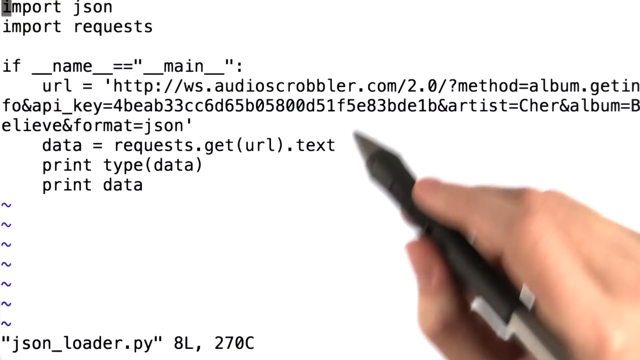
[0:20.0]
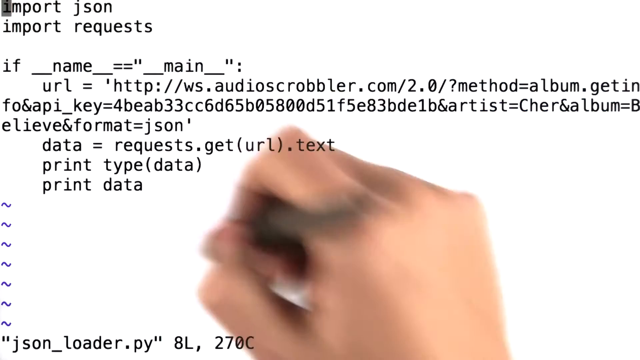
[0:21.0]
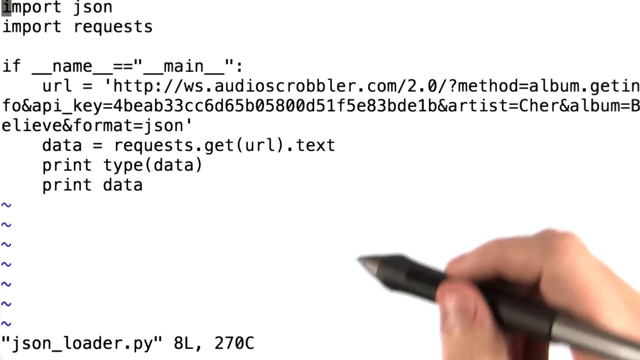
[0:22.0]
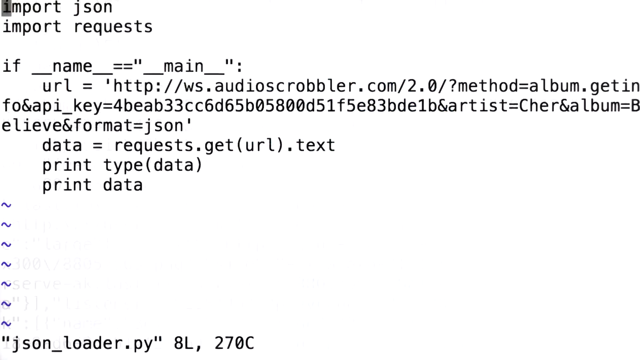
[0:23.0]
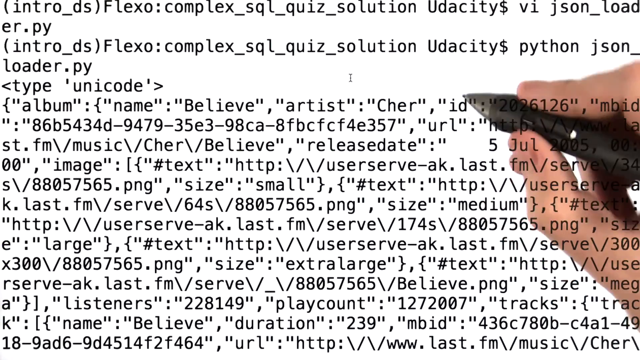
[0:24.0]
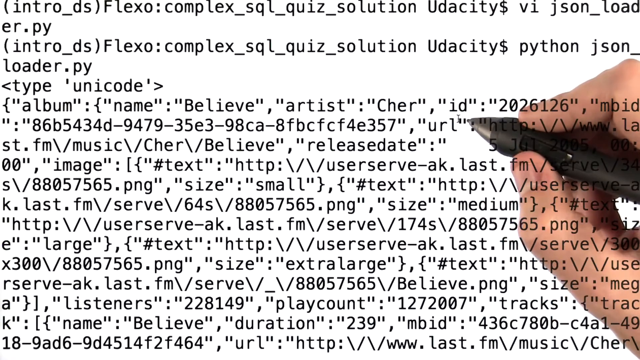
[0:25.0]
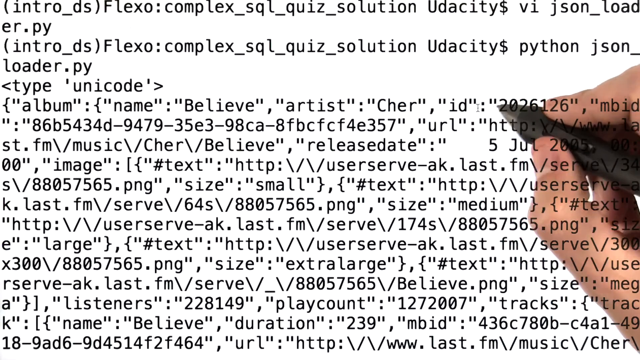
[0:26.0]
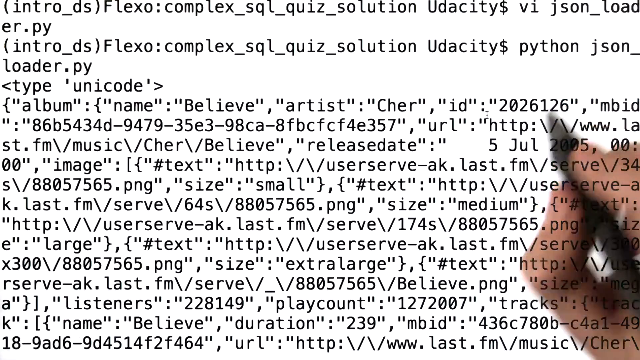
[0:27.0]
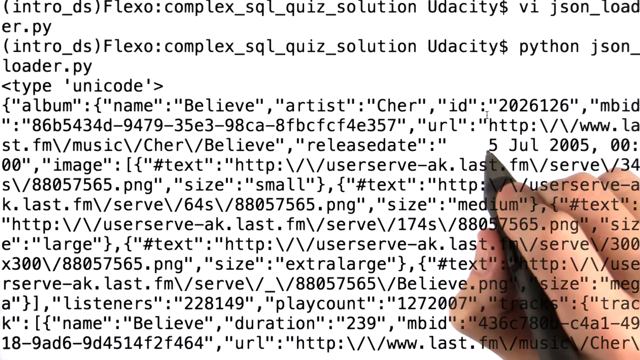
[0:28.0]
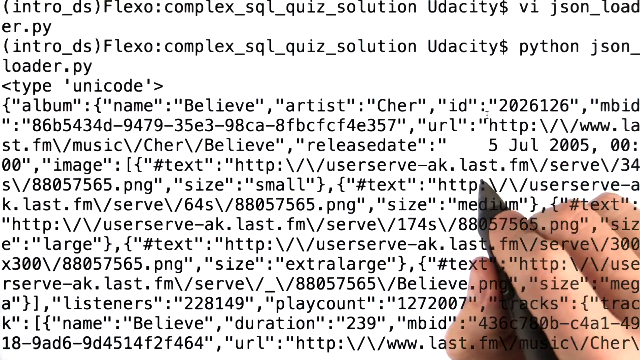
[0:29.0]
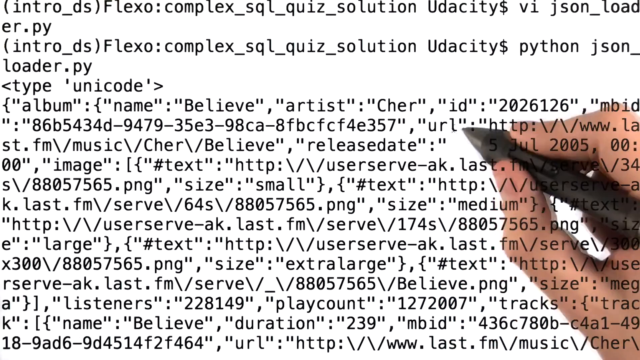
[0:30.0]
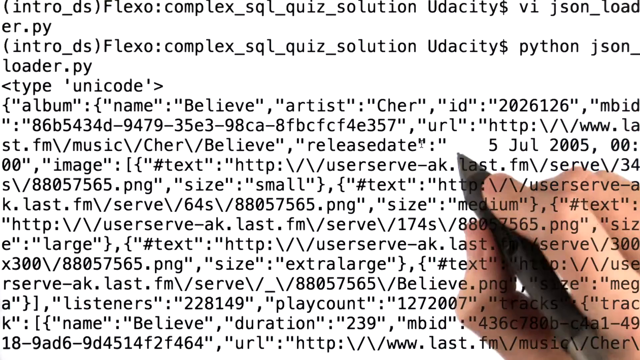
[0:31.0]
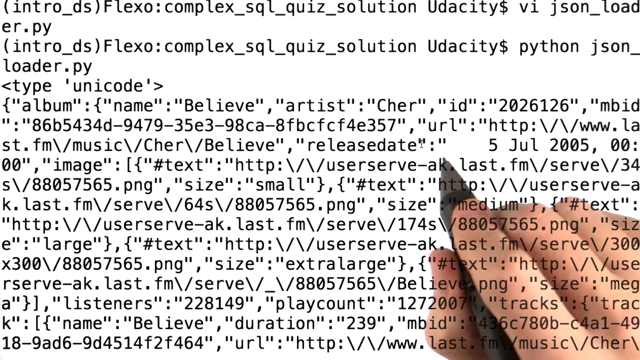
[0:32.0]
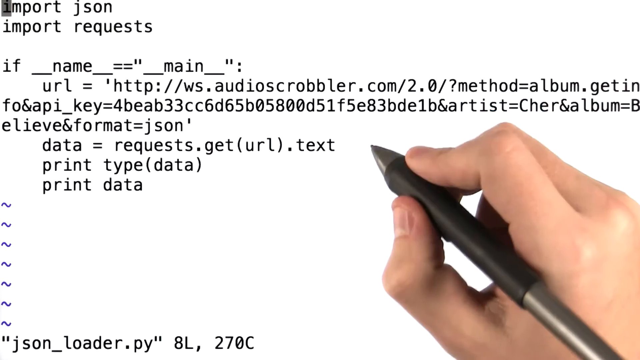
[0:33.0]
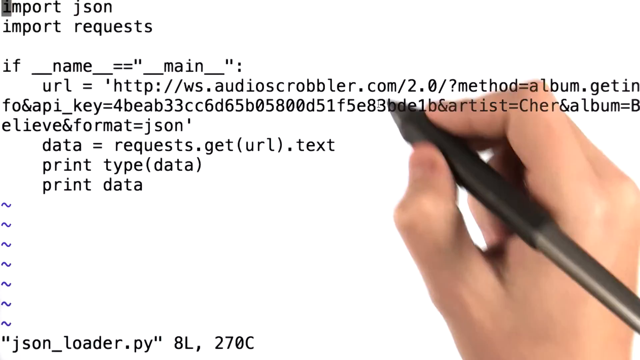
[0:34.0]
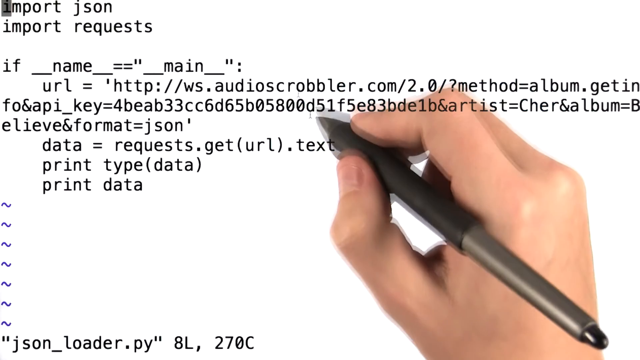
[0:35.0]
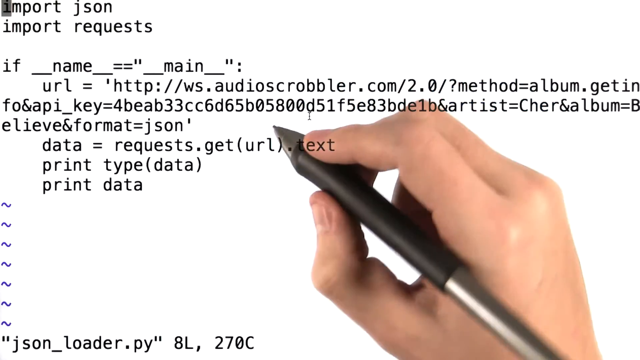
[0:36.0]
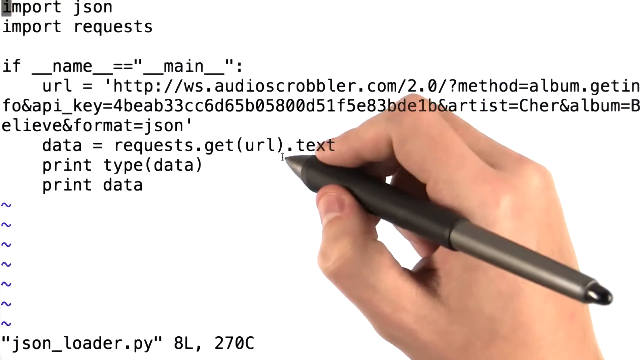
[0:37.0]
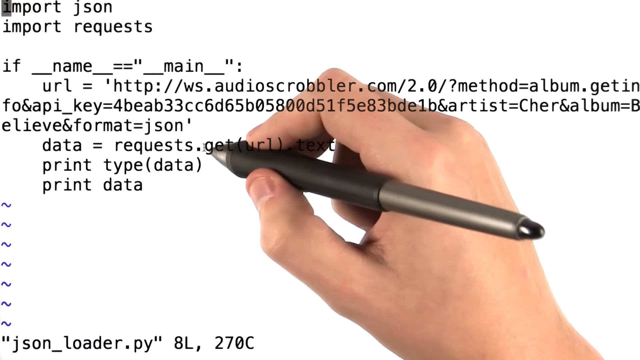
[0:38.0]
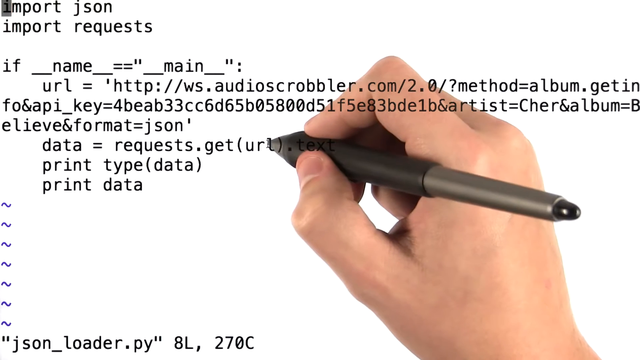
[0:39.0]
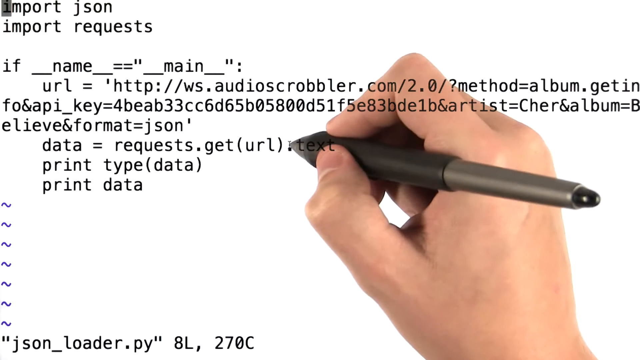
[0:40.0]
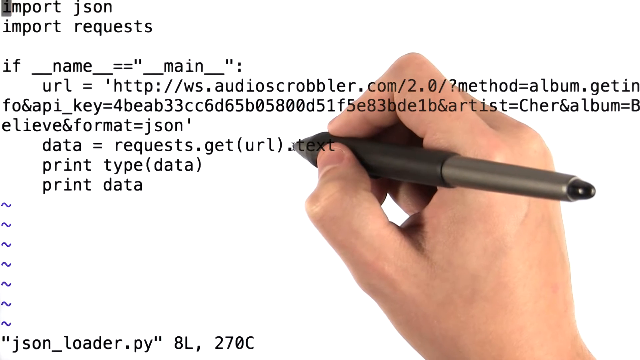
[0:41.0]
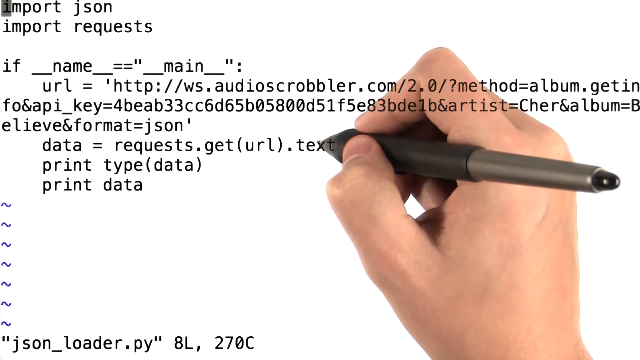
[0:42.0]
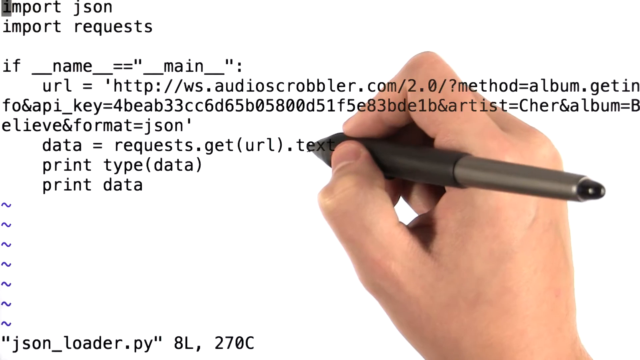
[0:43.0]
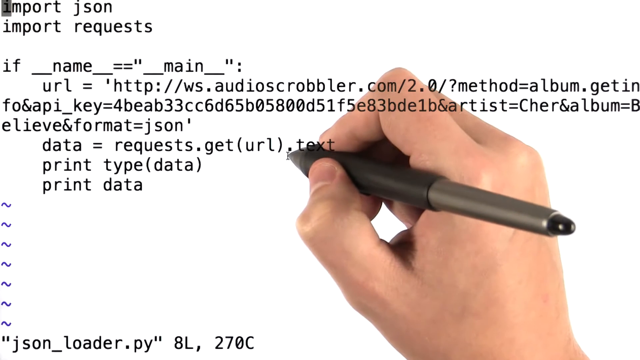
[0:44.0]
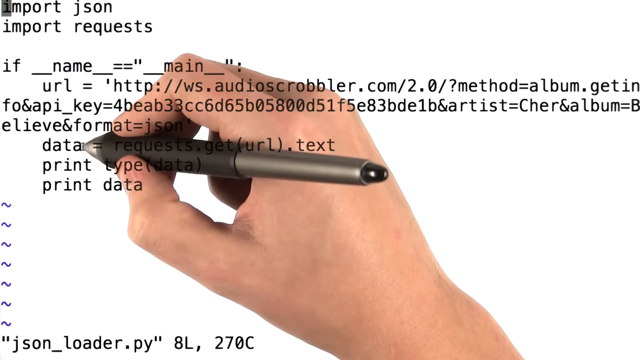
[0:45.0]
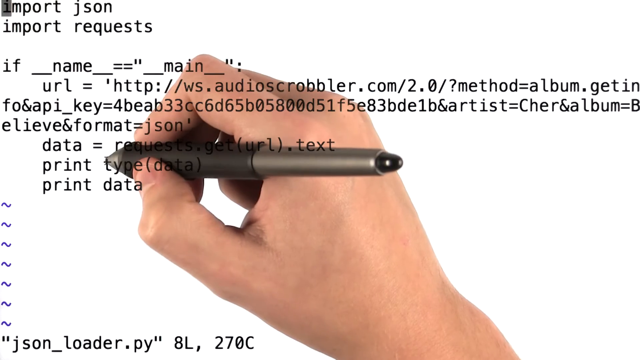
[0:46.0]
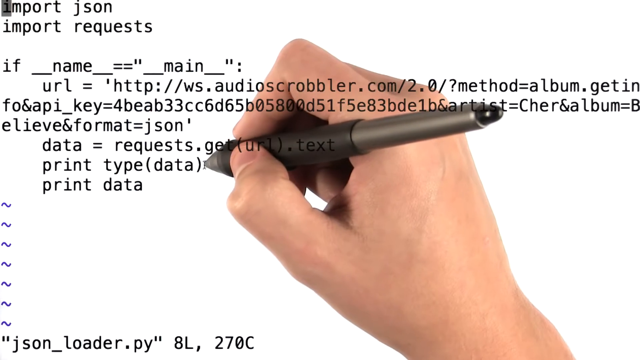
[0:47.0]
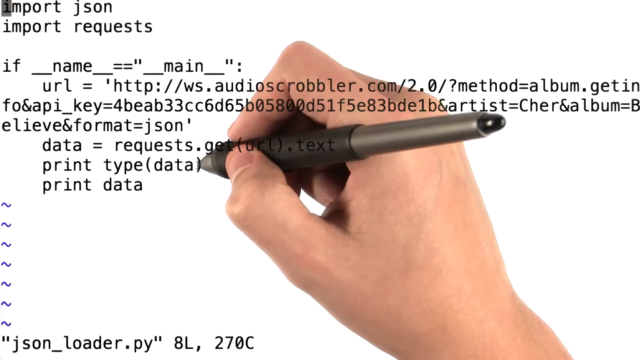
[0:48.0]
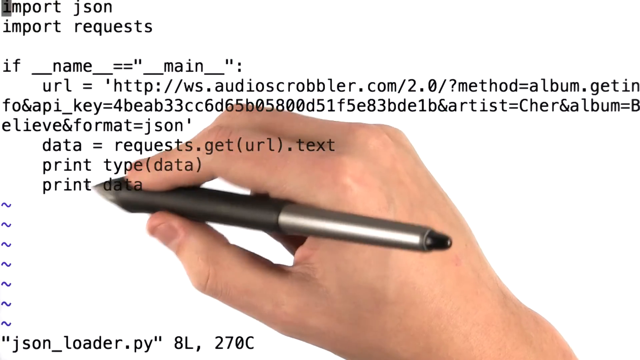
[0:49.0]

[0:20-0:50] Code is on the page, starting with "import JSON" and "import request", then an "if name equals main" line, a URL, a method line for album, a key, a line setting data equal to a request for the URL text, and a line to print the data. The author's hand is visible holding an ink pen. The screen then changes to show the album name, with everything broken down in detail into the URLs returned, and the URLs are separated into one URL per text.